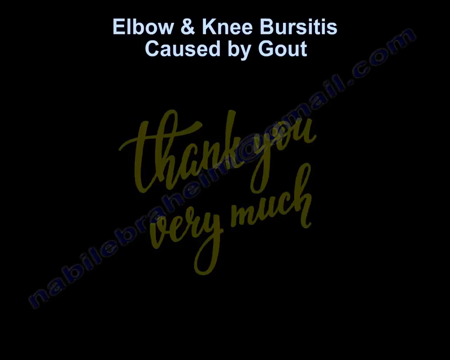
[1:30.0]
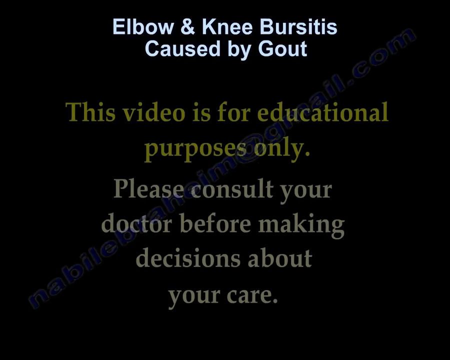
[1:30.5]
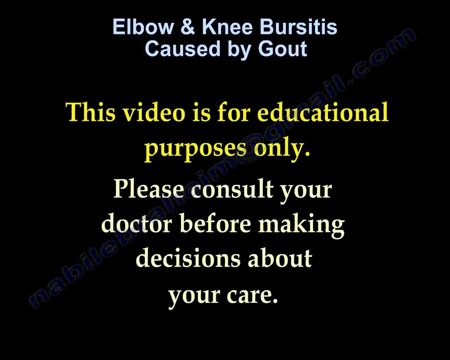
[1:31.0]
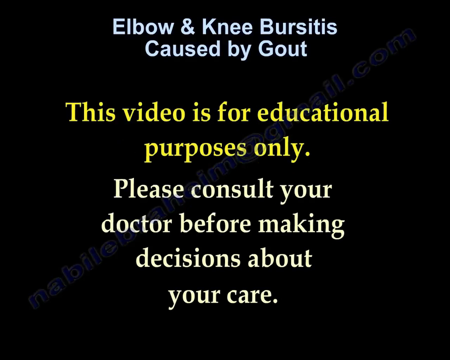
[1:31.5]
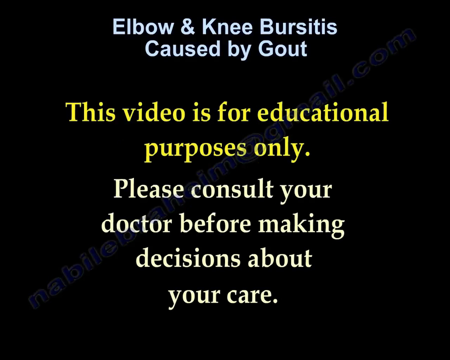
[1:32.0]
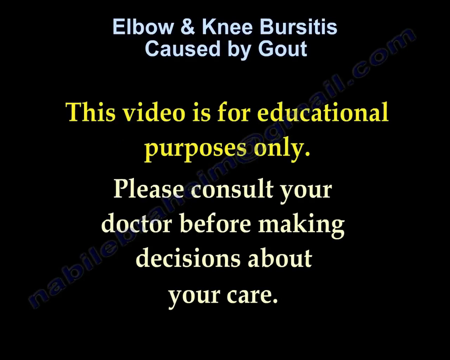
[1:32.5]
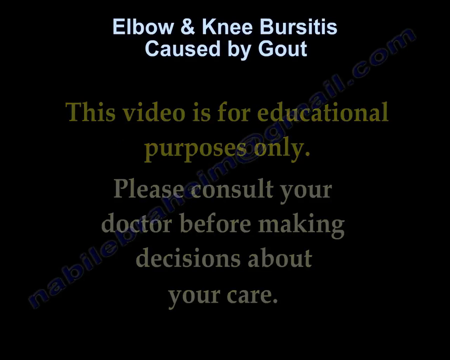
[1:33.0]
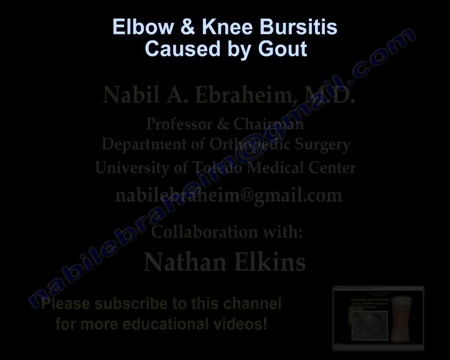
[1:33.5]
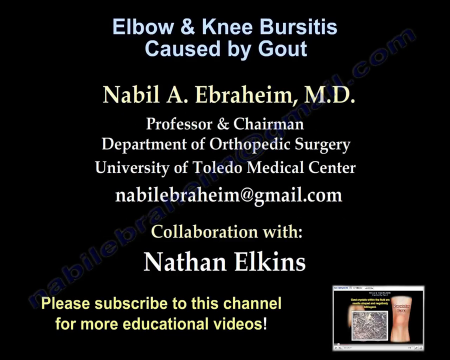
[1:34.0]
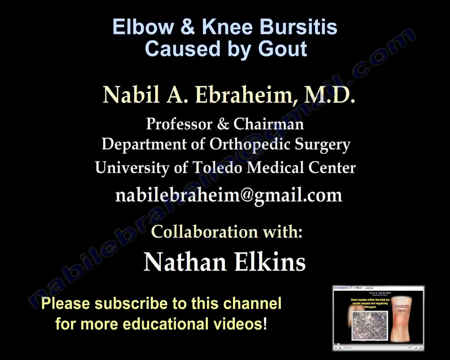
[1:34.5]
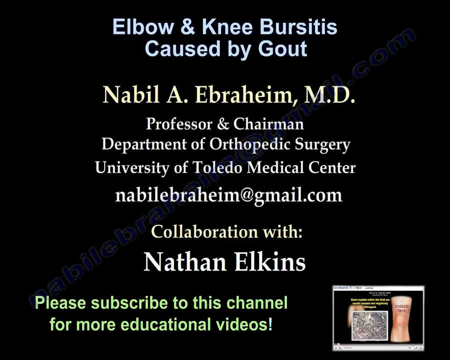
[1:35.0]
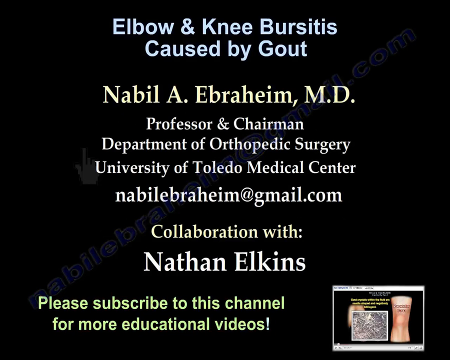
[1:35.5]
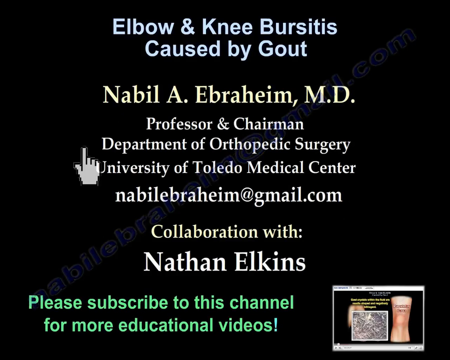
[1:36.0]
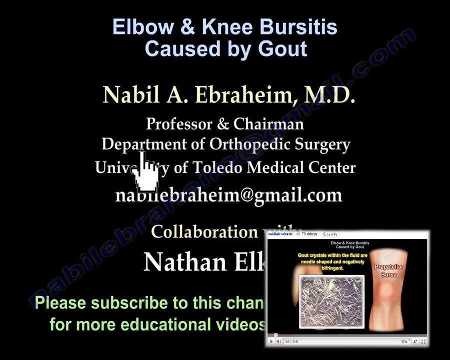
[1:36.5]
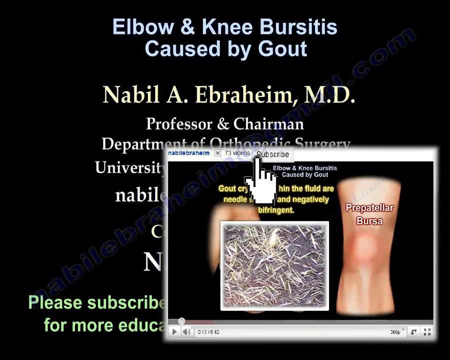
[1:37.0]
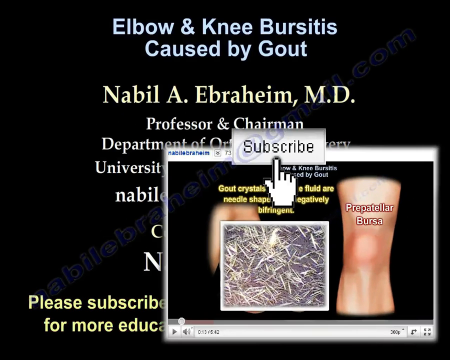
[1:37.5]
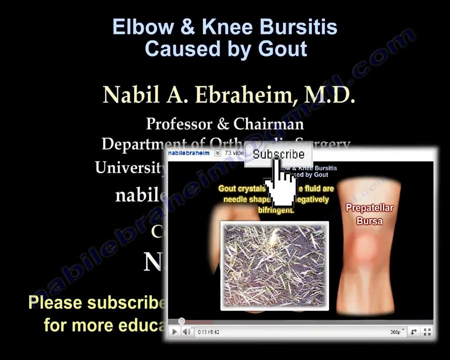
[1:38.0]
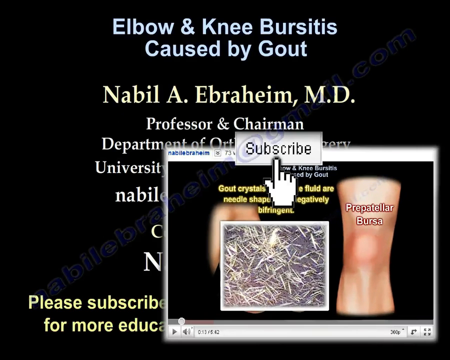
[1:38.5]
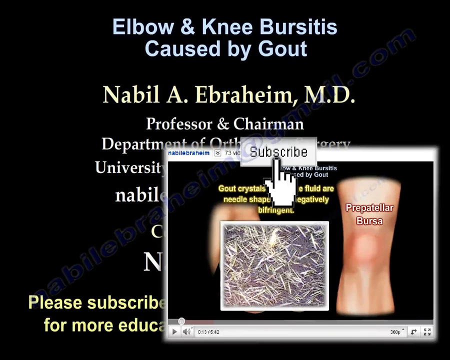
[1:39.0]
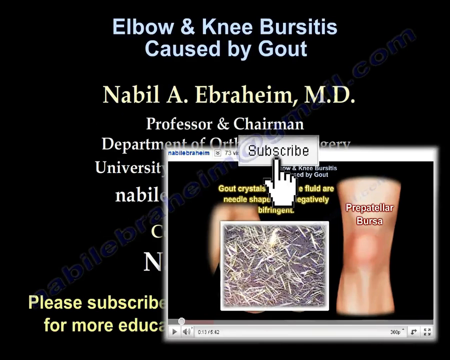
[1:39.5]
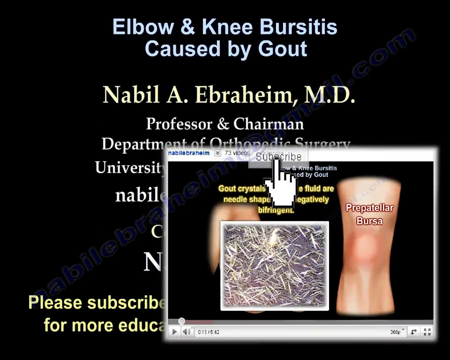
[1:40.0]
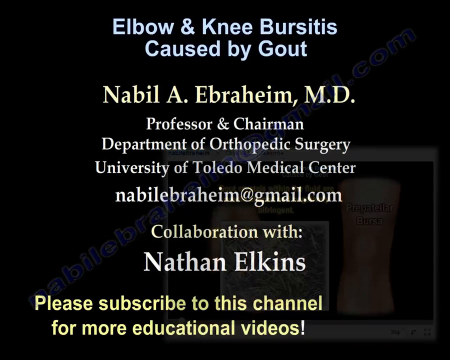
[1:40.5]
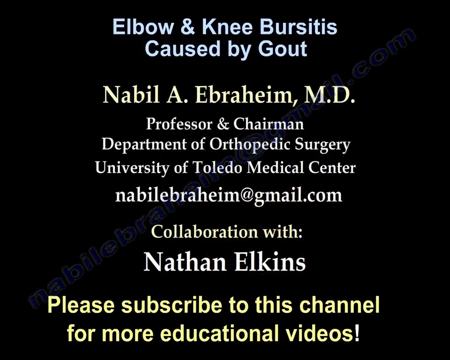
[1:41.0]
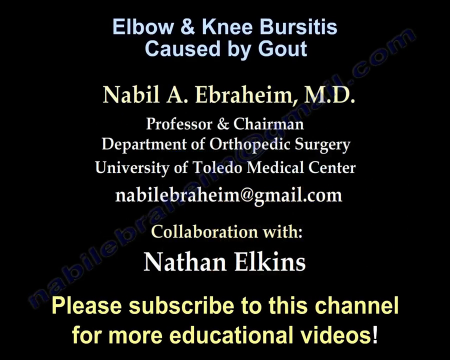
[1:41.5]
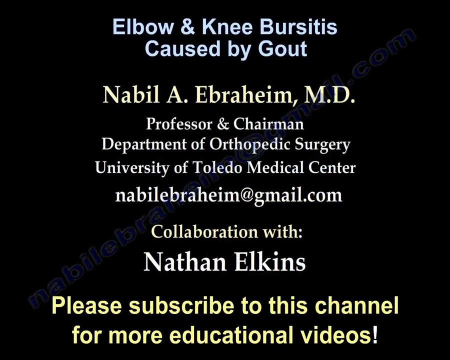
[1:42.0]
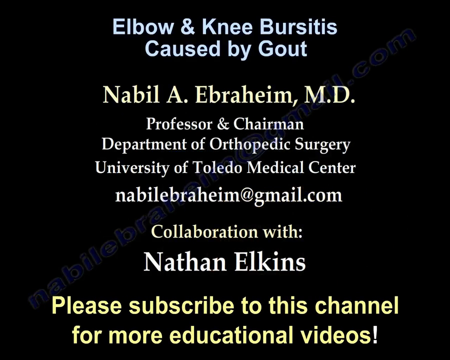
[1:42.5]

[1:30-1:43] A black screen shows the title "elbow and knee bursitis caused by gout" at the top. Yellow text reads "this video is for educational purposes only", then white text reads "please consult your doctor before making decisions about your care". The slide changes to show the information of a doctor, Nabil A. Ebraheim, MD, professor and chairman, department of orthopedic surgery at the University of Toledo Medical Center, along with his email and the name of his collaborator on the video, Nathan Elkins. Text reads "please subscribe to this channel for more educational videos". A mouse hand cursor then clicks on a video and hits the word subscribe.